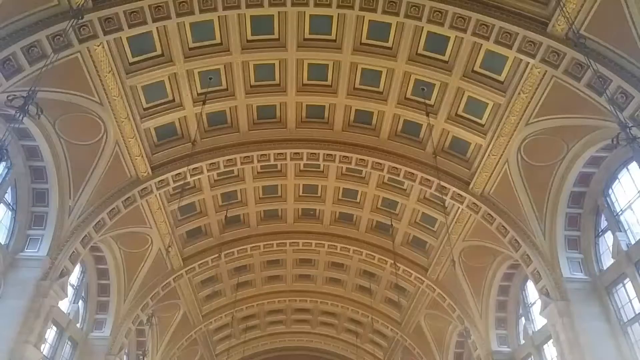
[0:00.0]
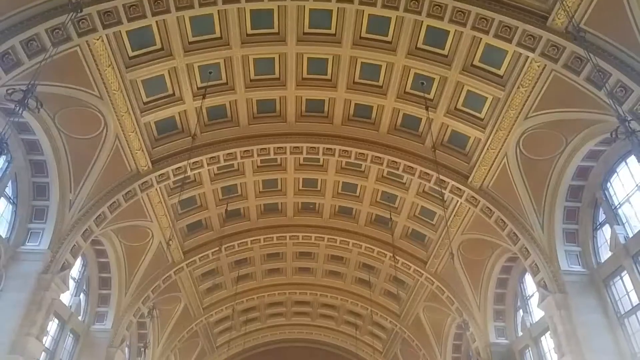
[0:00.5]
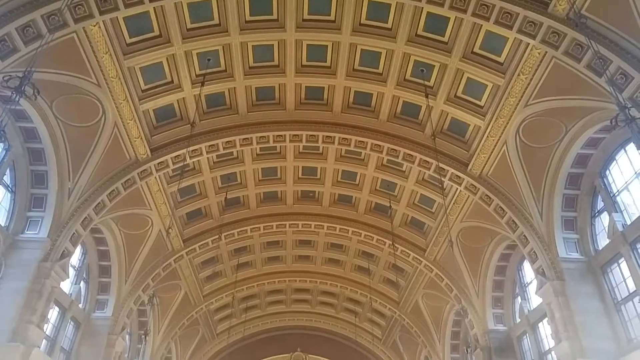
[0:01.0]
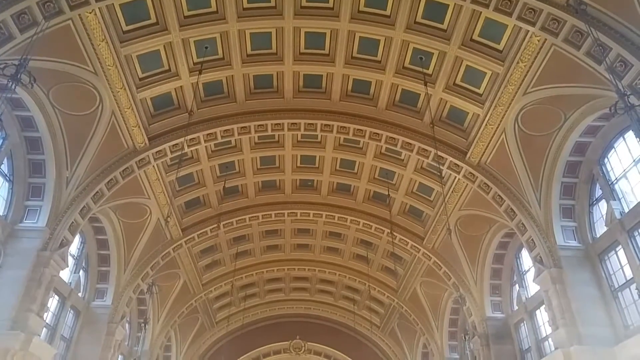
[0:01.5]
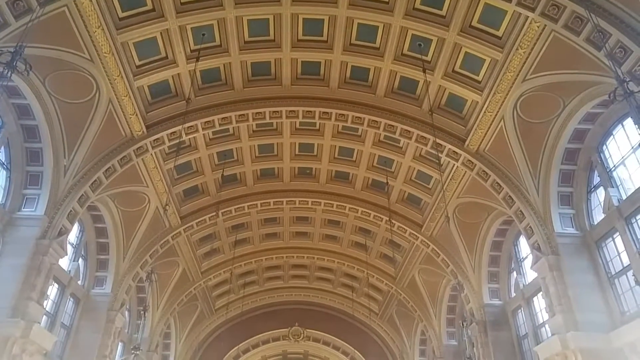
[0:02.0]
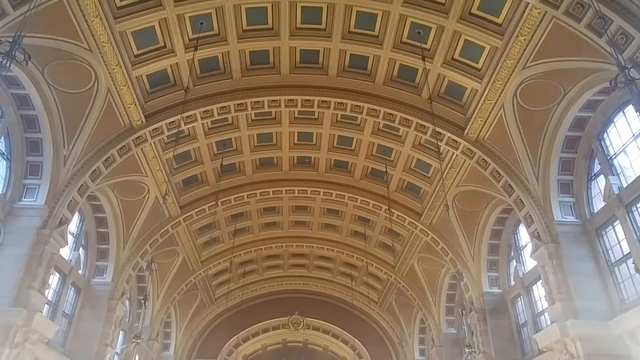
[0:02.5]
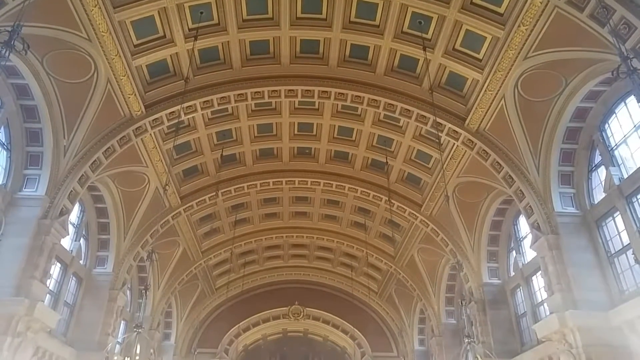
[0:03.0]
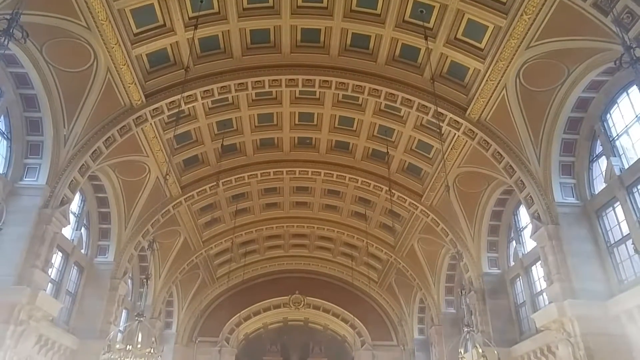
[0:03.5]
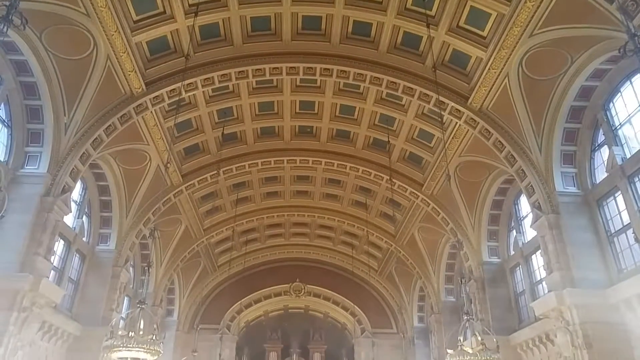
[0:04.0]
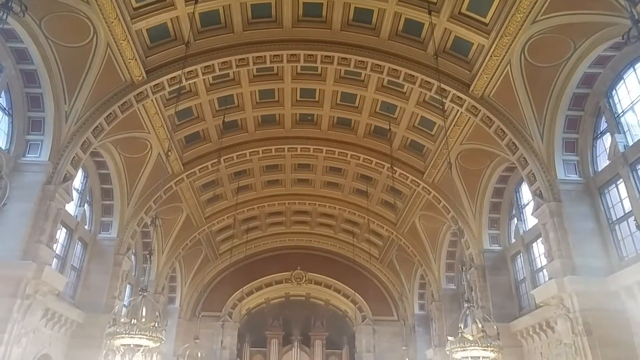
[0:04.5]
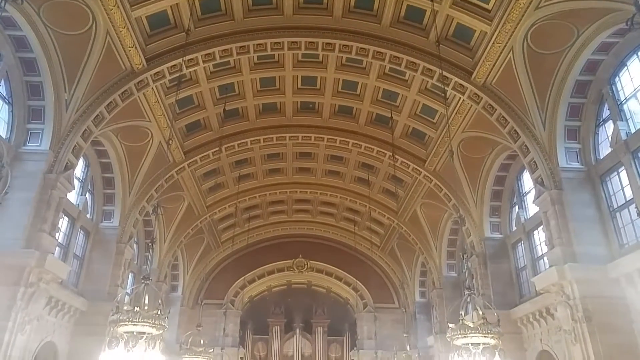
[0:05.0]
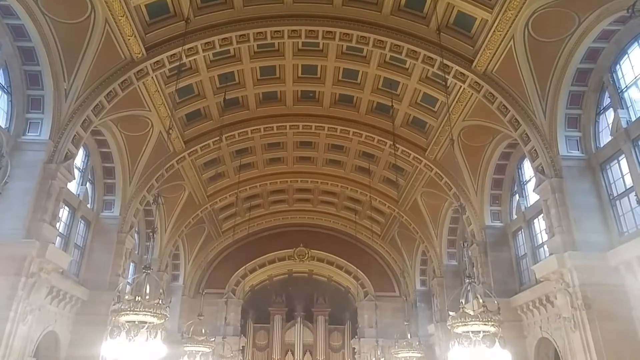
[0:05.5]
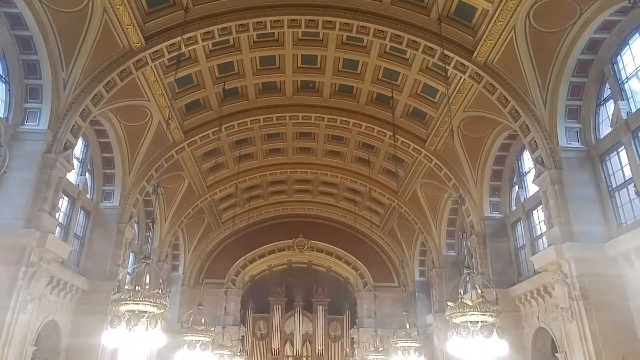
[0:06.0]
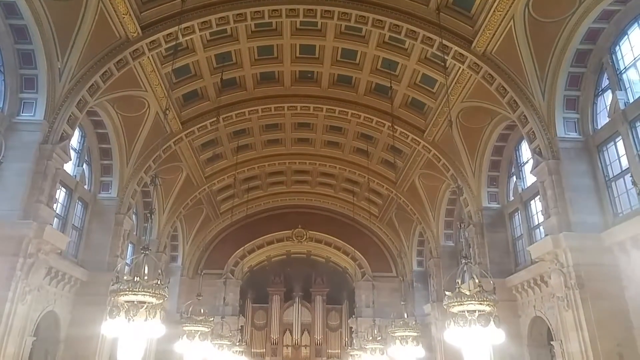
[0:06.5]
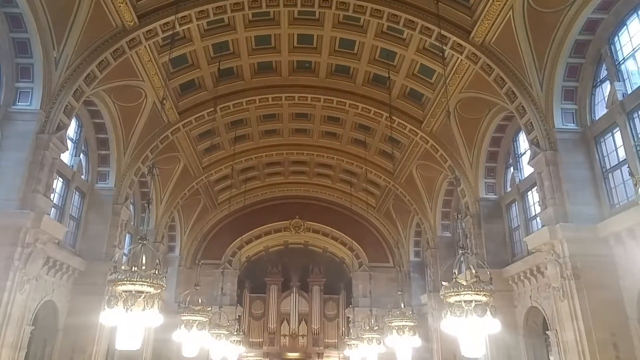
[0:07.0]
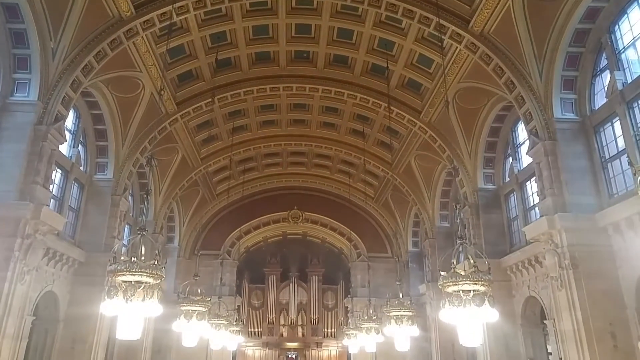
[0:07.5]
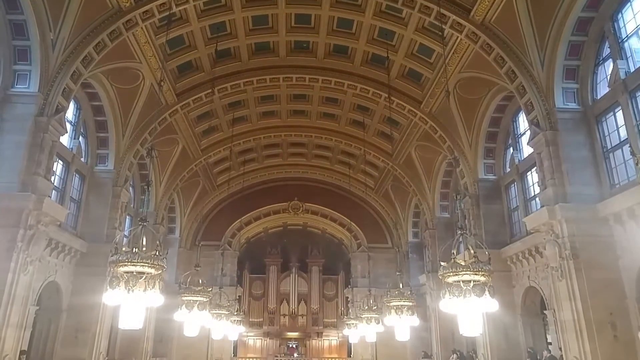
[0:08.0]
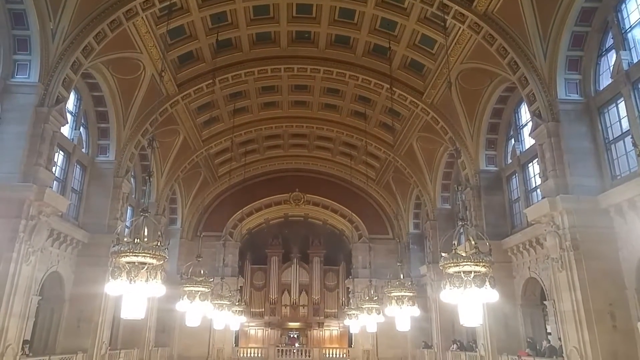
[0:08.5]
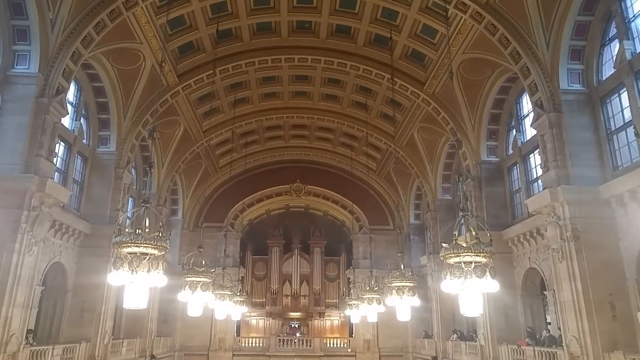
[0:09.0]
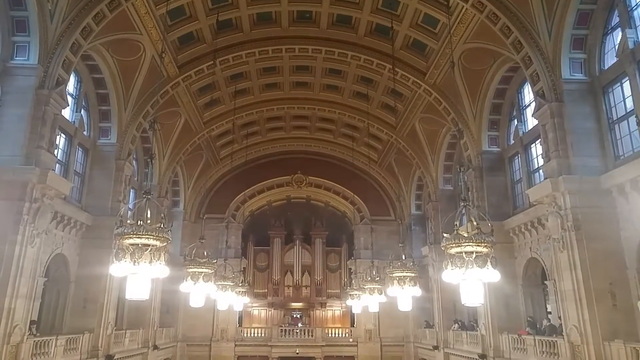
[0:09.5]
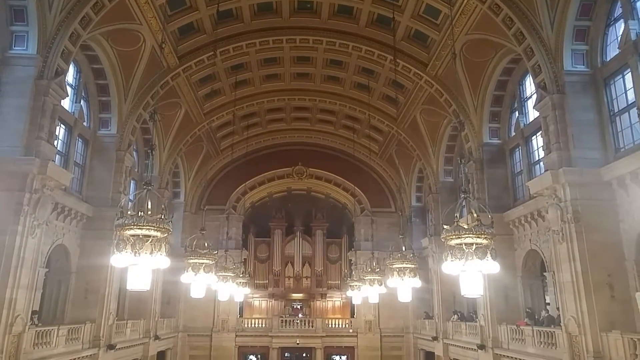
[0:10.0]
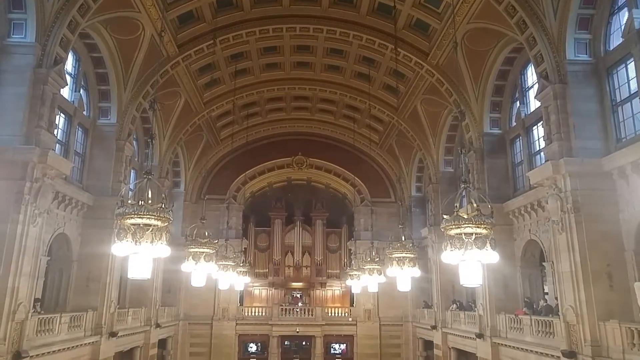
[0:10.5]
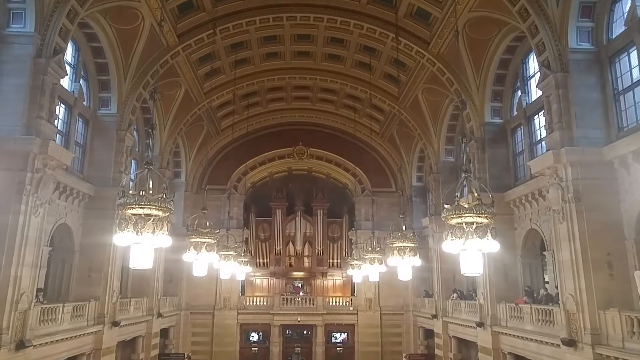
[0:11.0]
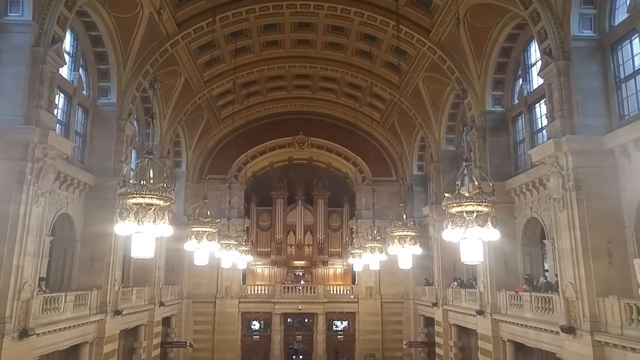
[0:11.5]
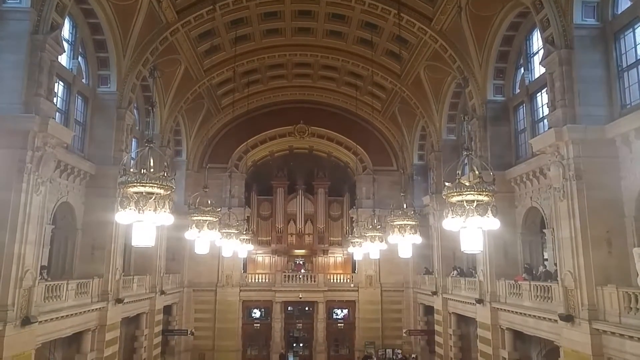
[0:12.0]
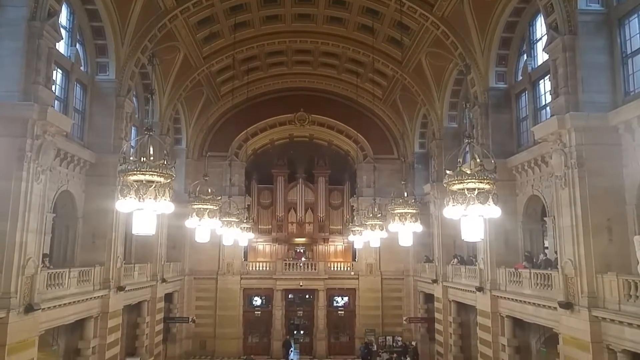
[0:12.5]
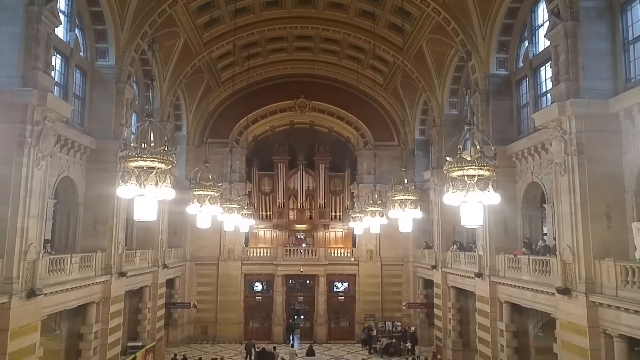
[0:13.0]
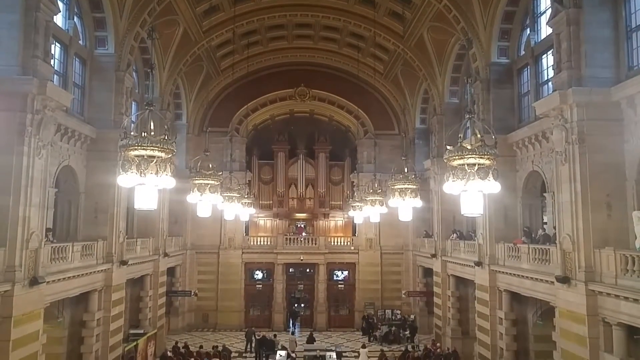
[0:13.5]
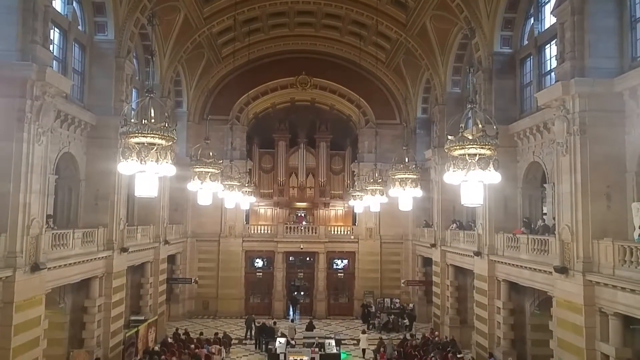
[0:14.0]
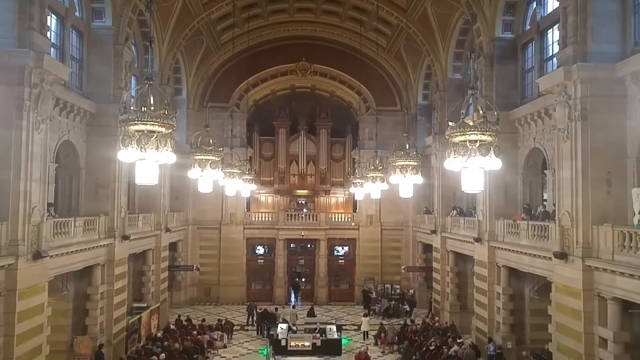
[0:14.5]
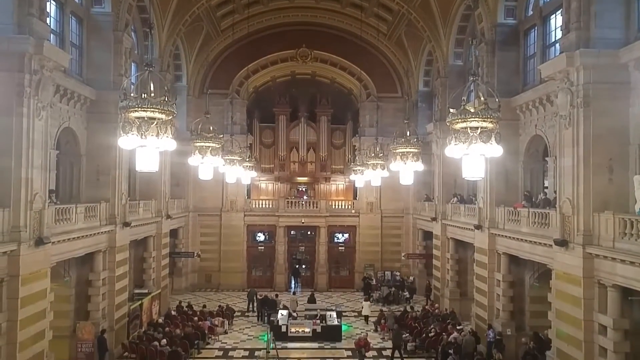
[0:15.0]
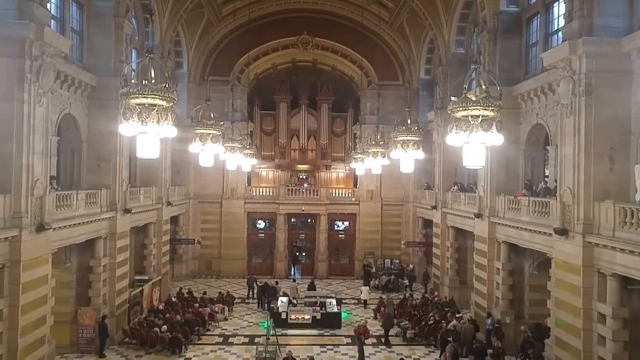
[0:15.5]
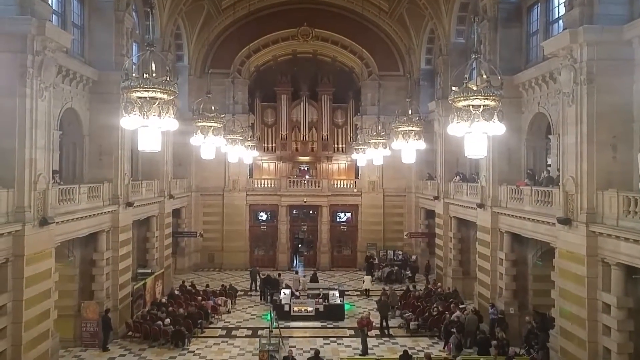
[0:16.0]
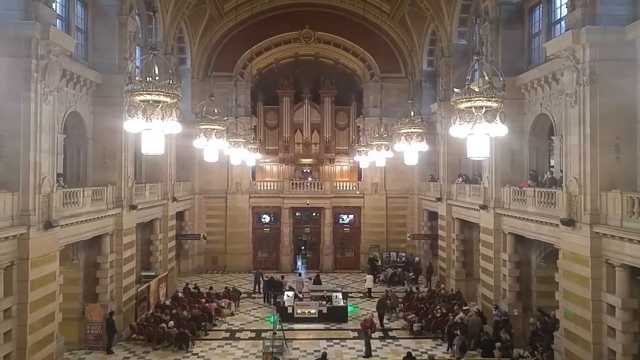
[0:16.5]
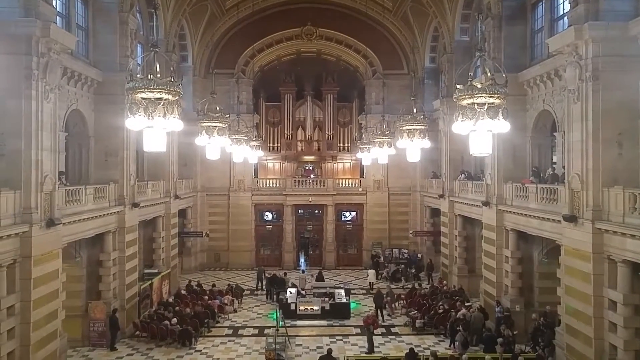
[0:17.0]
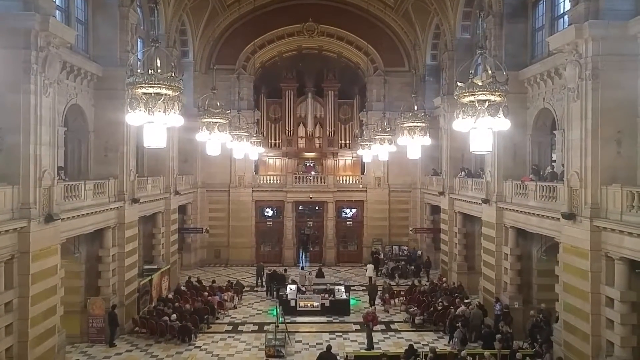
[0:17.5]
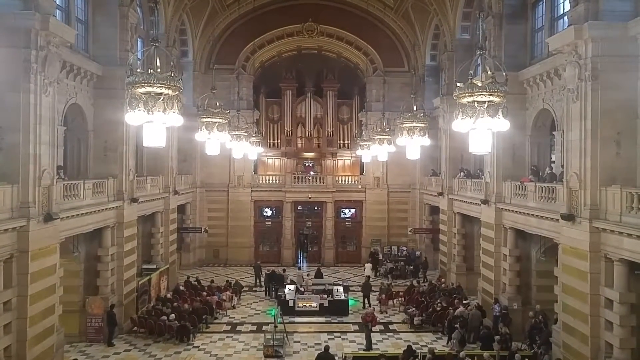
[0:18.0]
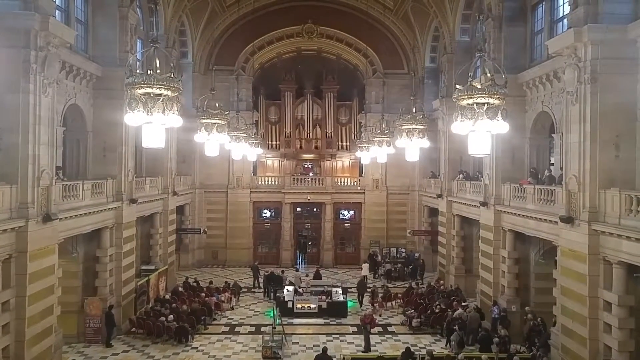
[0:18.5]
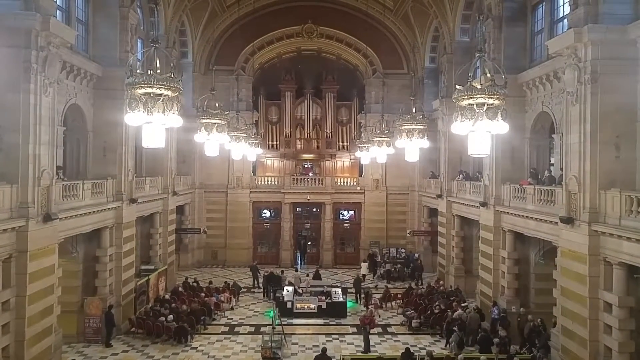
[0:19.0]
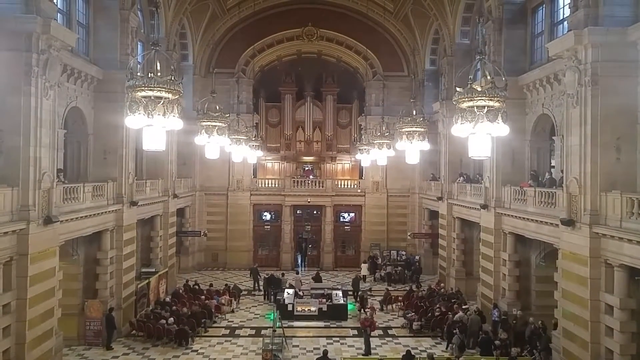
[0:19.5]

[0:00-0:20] The video opens on the ceiling of a very large building. The ceiling is shaped in an arc and has many gray squares on it, while everything else around the ceiling is a tannish brown. The camera then pans downward to a large arc in the center of the building. At the bottom of this arc are three doors, and around the sides are various arcs and railings on a second floor. Eight light fixtures hang down from the ceiling. On the floor of the church building, people are gathered around each other in groups. All of the walls are tan brown, and there are large arc-shaped windows. Entryways on the second floor and the bottom floor are also shaped like arcs.